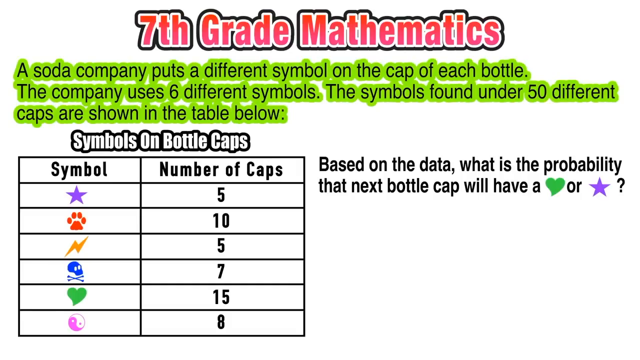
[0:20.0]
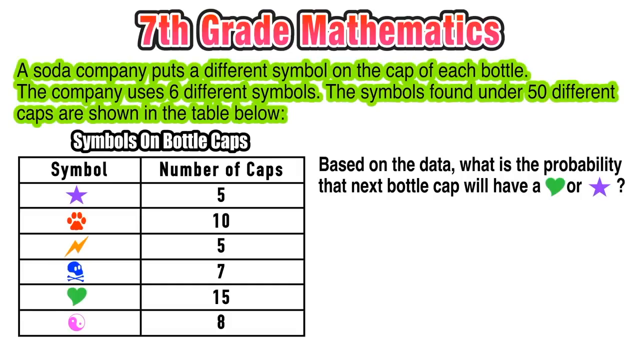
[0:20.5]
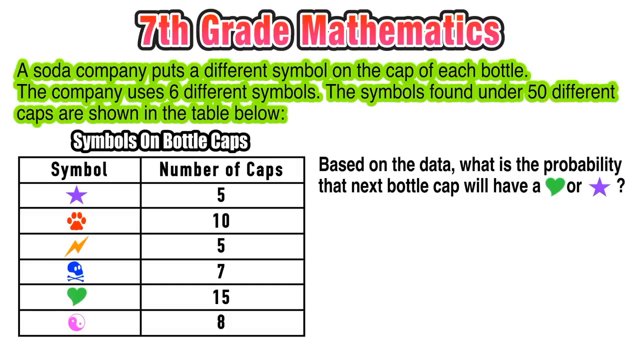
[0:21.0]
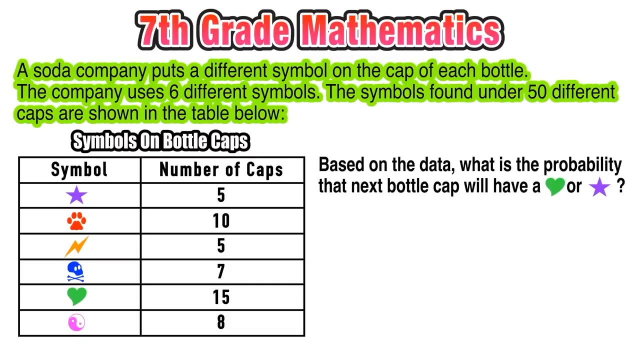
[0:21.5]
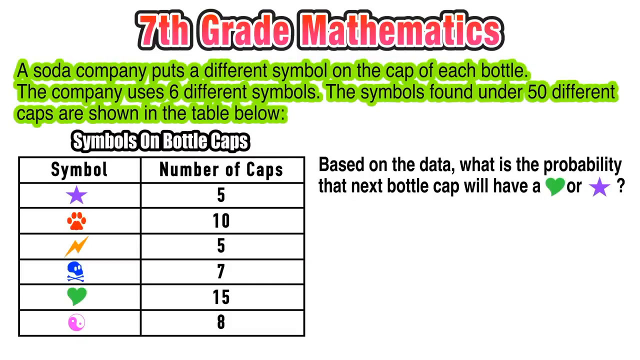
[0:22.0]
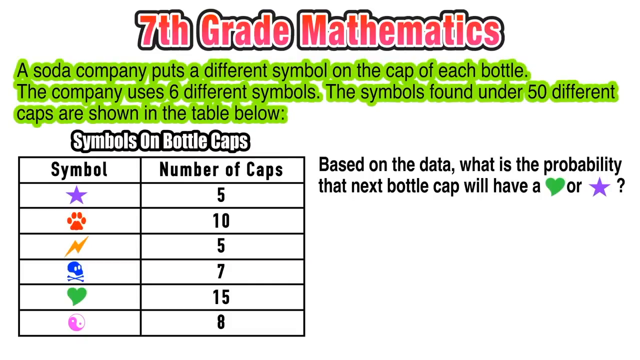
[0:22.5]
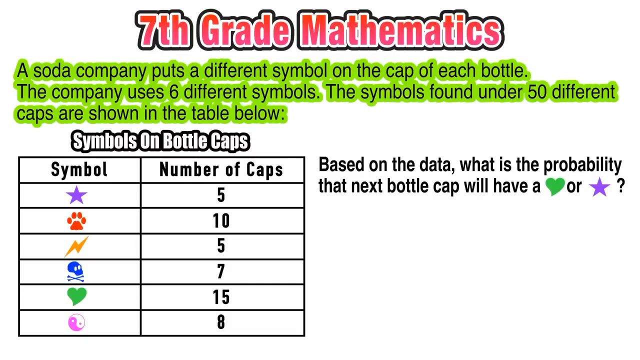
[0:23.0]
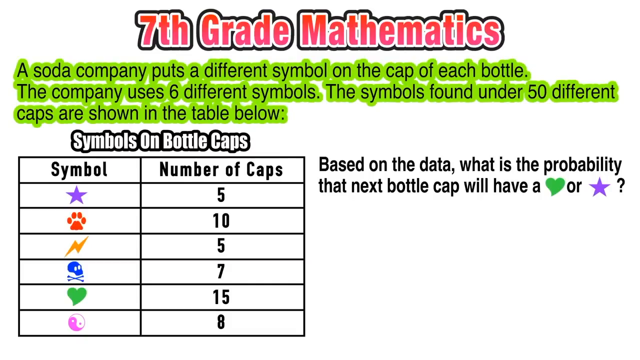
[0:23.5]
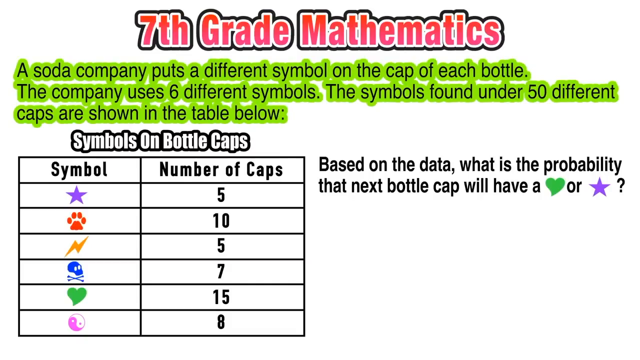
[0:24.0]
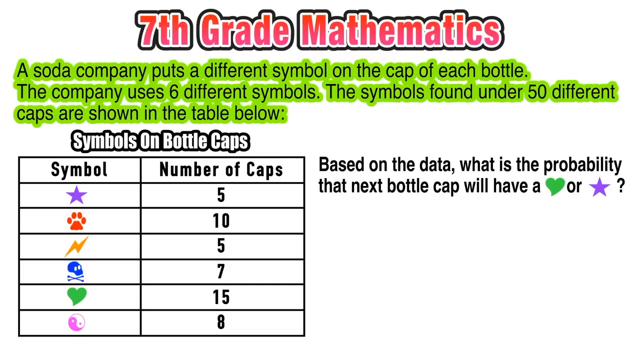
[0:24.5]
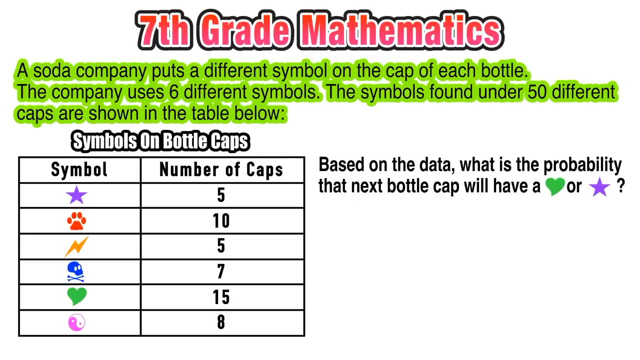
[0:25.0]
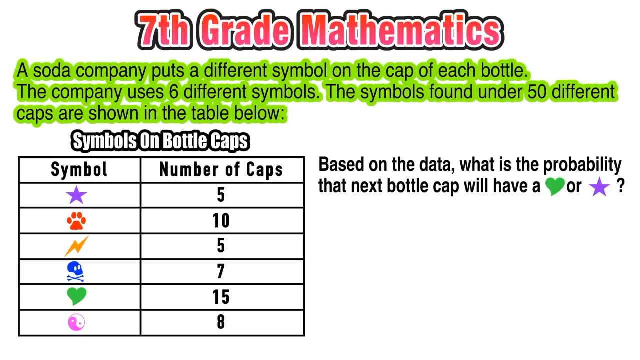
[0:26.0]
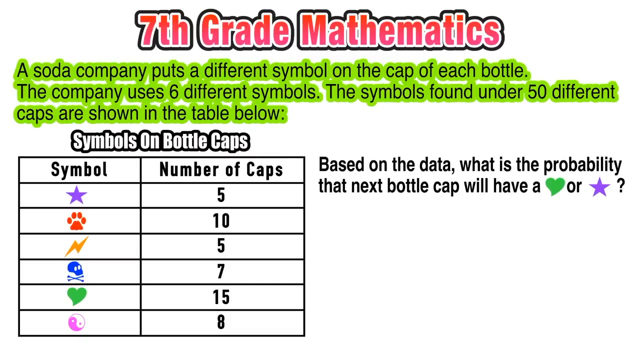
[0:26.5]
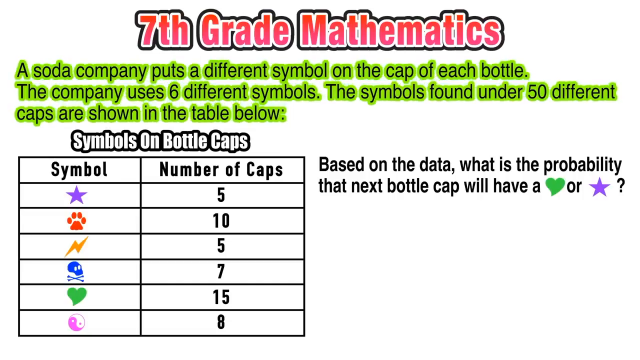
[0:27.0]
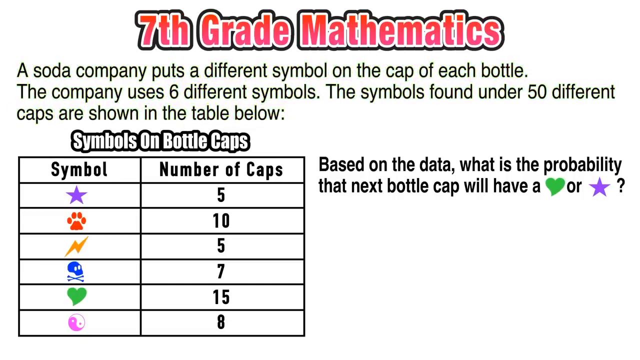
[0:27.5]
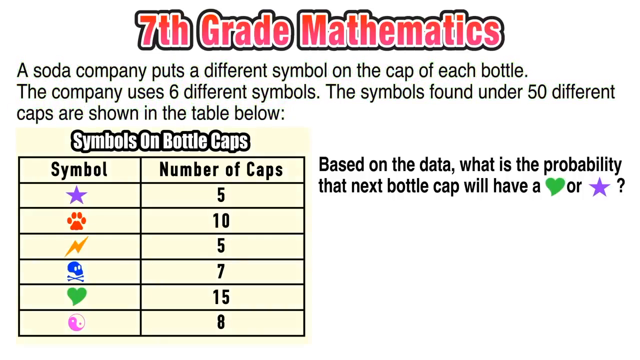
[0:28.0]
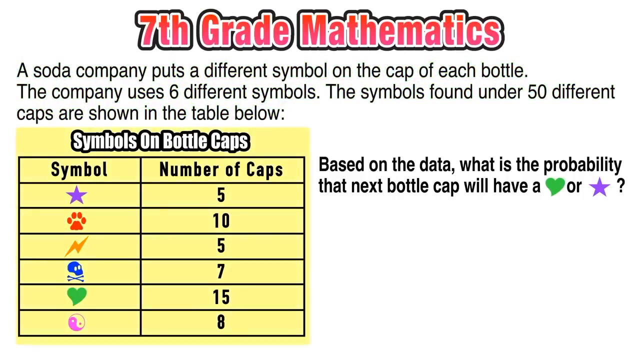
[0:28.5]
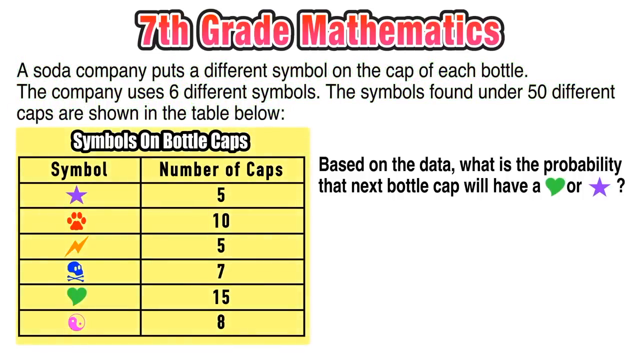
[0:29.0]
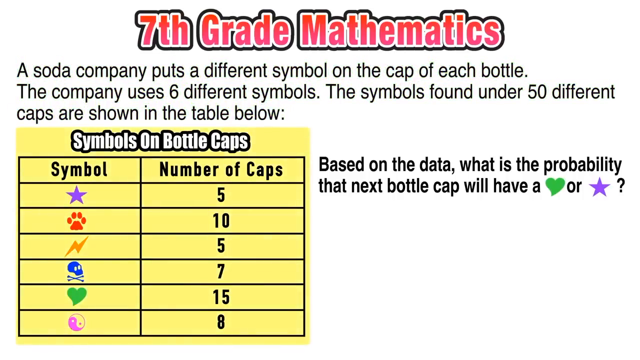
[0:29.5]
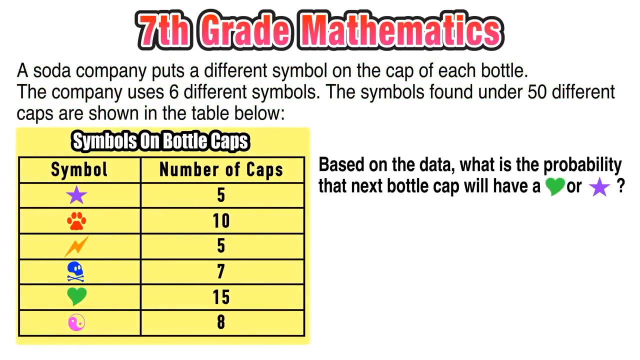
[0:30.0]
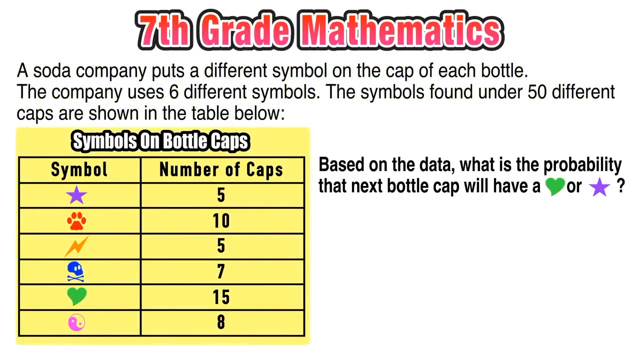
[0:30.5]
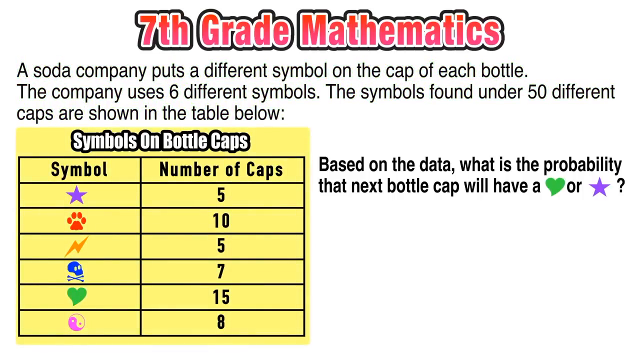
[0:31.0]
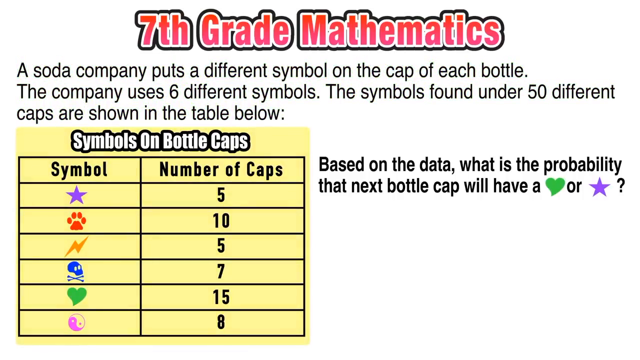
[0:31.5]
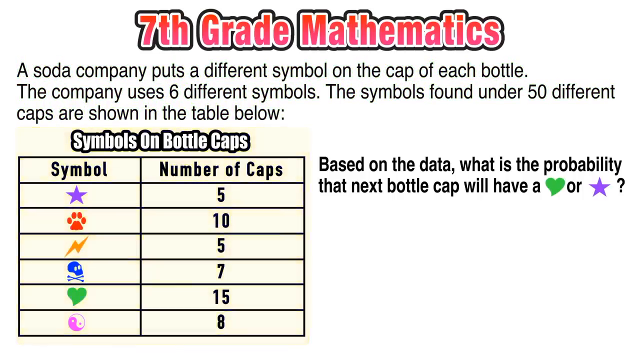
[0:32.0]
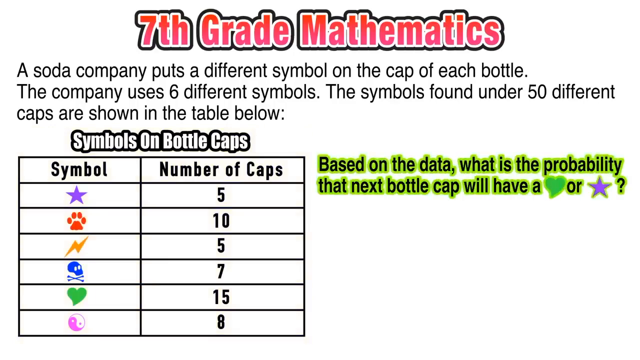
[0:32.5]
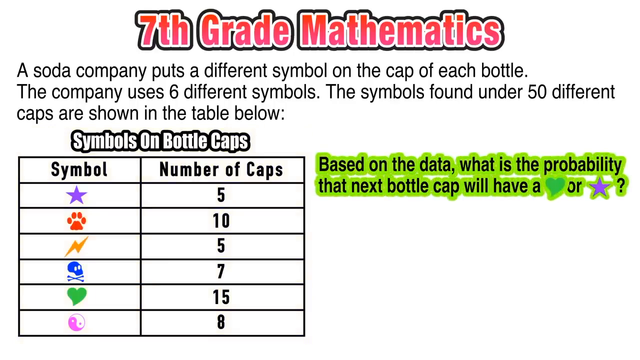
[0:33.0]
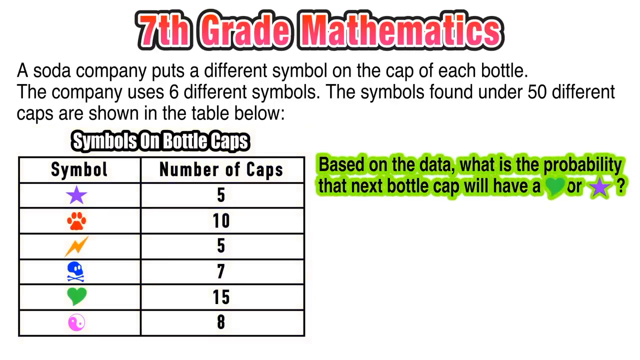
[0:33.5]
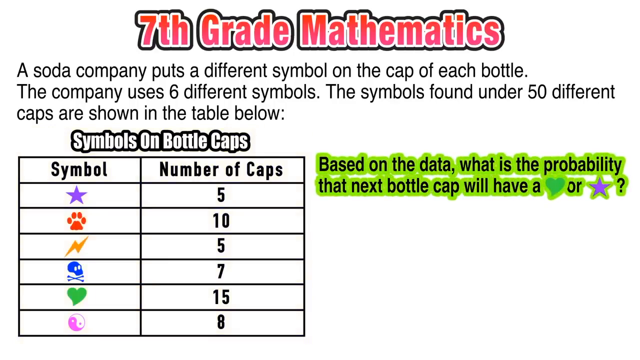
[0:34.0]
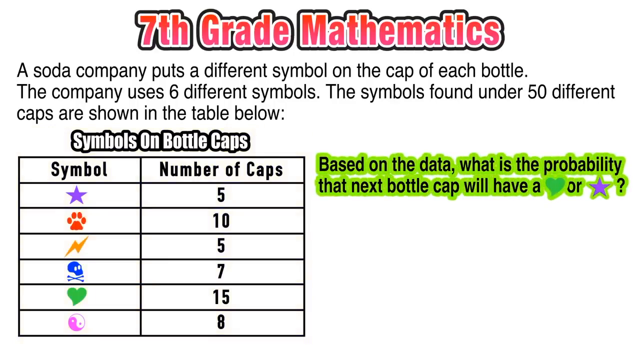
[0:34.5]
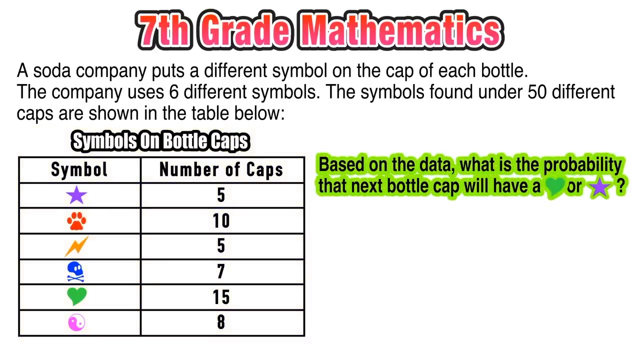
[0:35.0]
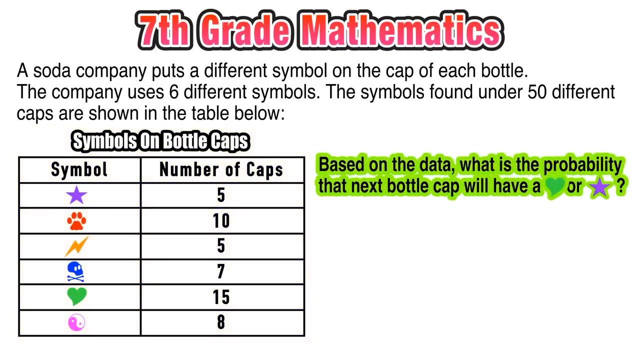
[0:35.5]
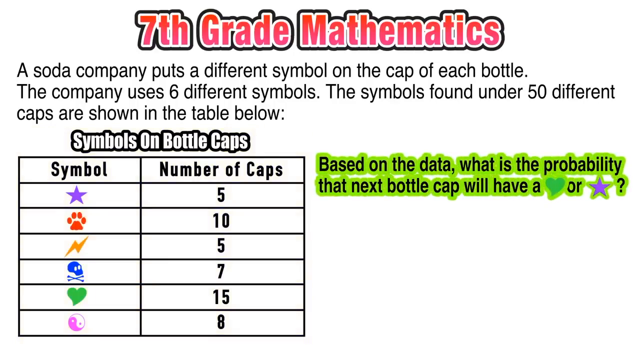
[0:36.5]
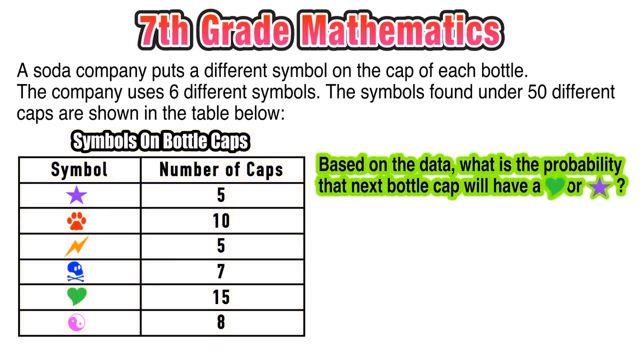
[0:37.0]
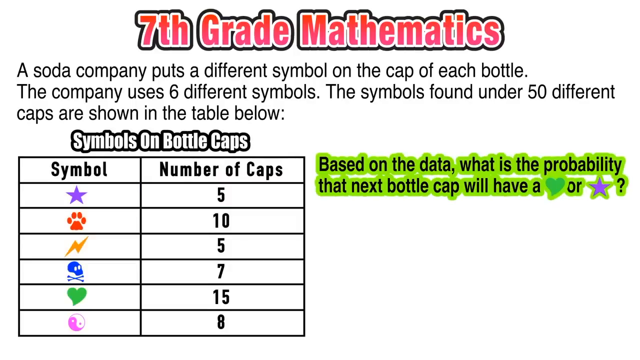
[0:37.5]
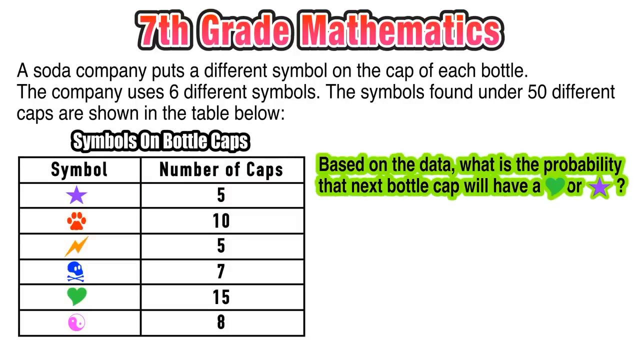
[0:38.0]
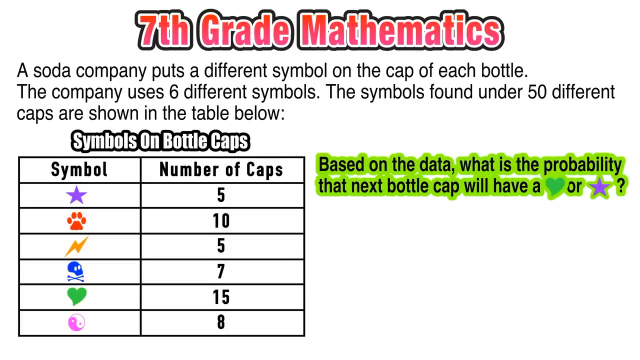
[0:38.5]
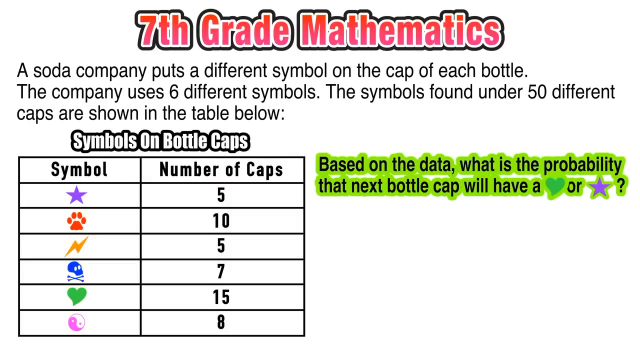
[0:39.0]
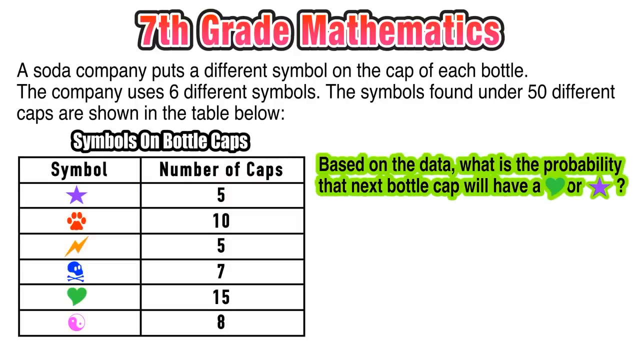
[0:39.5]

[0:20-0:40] "Seventh grade mathematics" is written at the top in red. Below, words written in black and highlighted in green read "a soda company puts different symbol on the cap of each bottle. The company uses six different symbols. The symbols found under 50 different caps are shown in the table." Below that is a diagram titled "symbols on bottle caps", with a row of symbols on the left side and the number of caps on the right side, with figures written in each segment. A question reads "based on the data, what is the probability that the next bottle cap will have a heart or a star?" The heart is shown in green and the star in purple. The background of the screen is grayish, and the diagram changes between yellow and white, showing different colors.